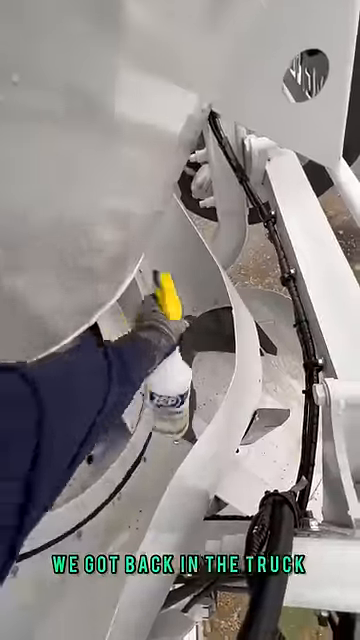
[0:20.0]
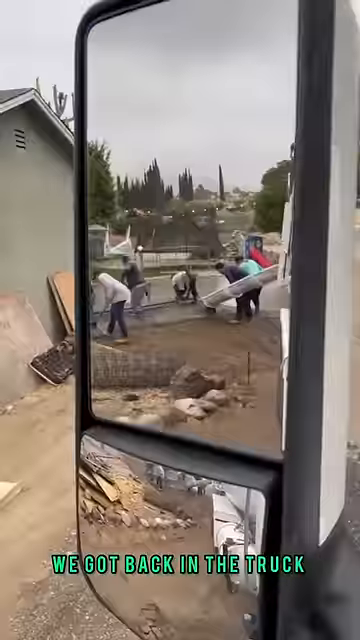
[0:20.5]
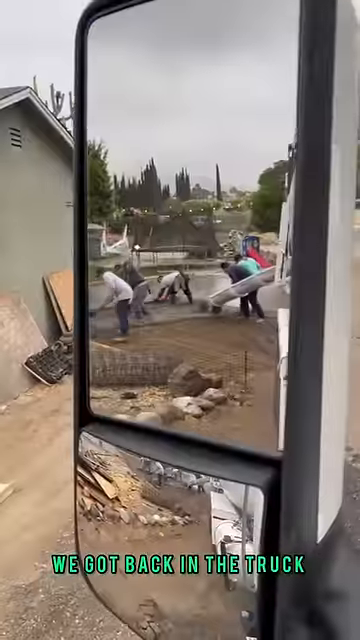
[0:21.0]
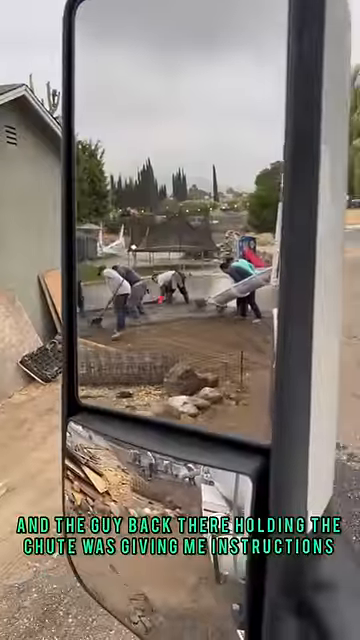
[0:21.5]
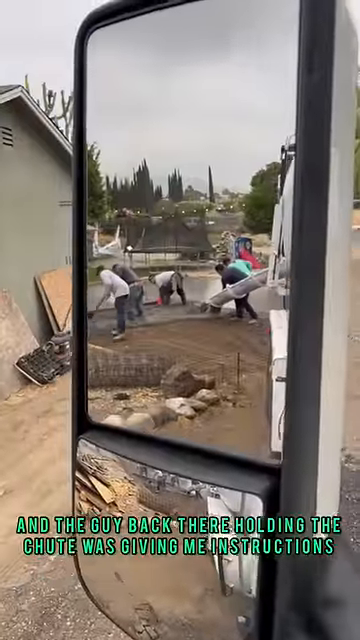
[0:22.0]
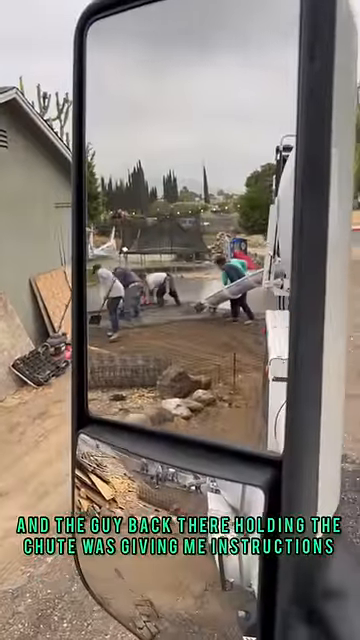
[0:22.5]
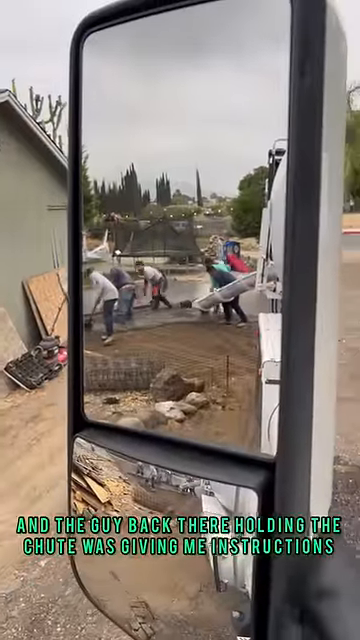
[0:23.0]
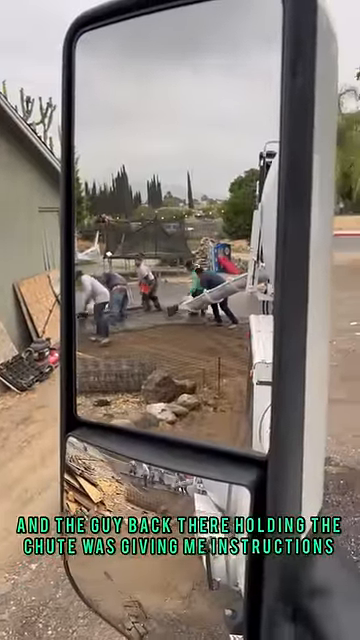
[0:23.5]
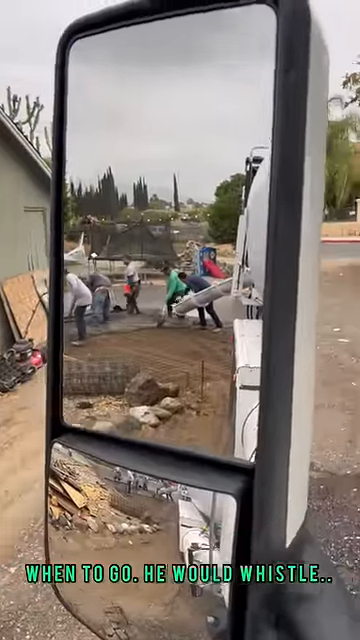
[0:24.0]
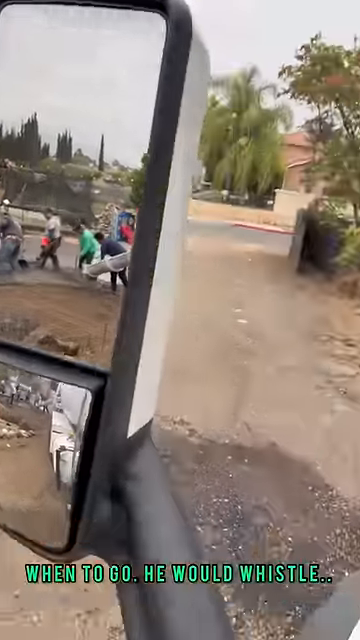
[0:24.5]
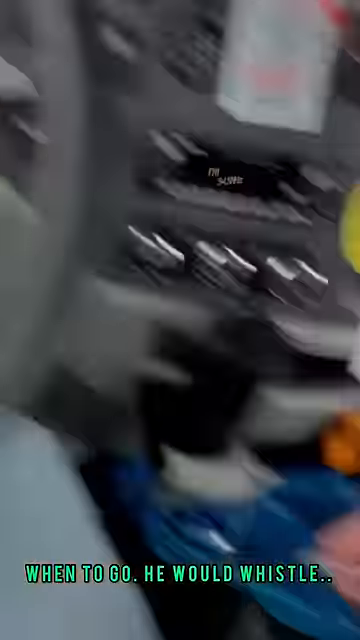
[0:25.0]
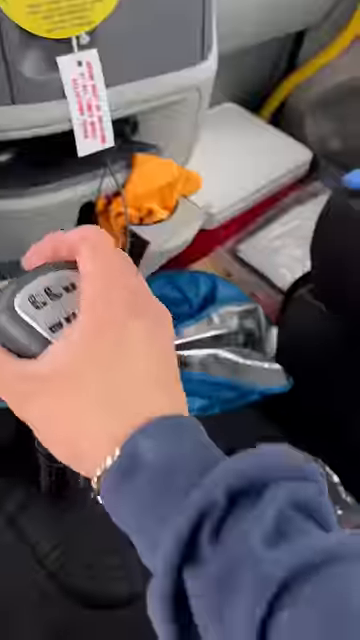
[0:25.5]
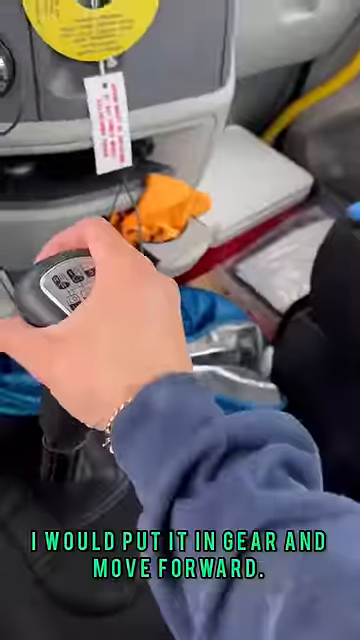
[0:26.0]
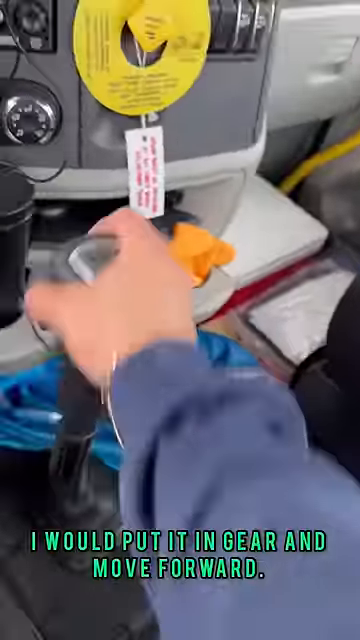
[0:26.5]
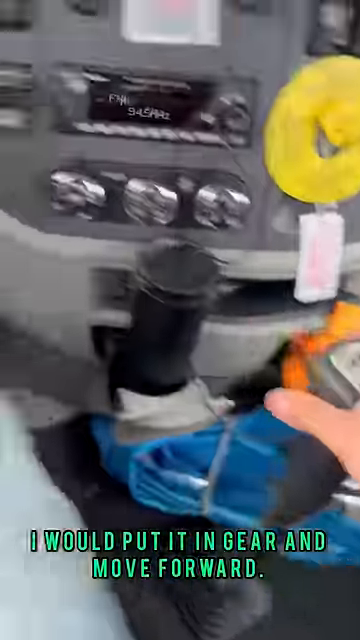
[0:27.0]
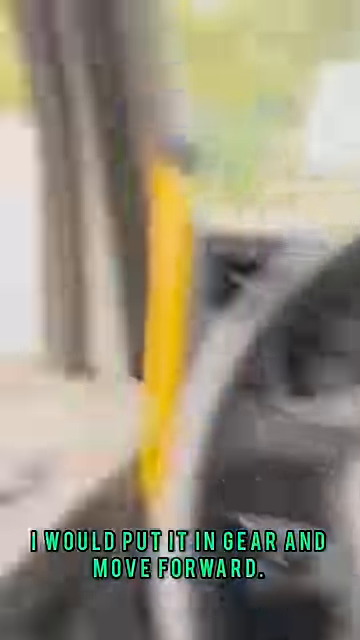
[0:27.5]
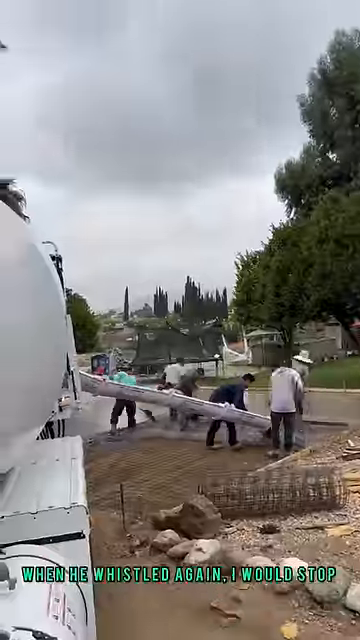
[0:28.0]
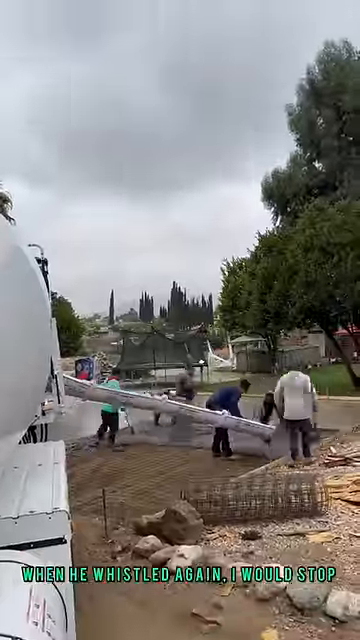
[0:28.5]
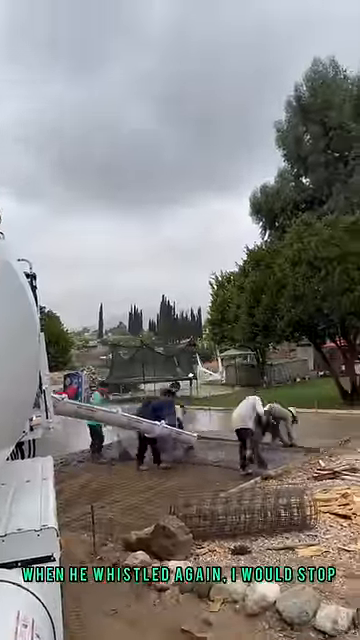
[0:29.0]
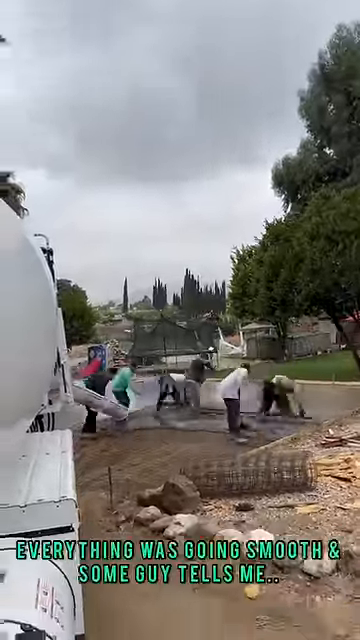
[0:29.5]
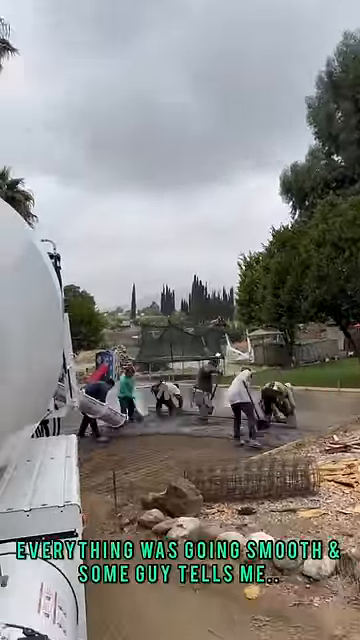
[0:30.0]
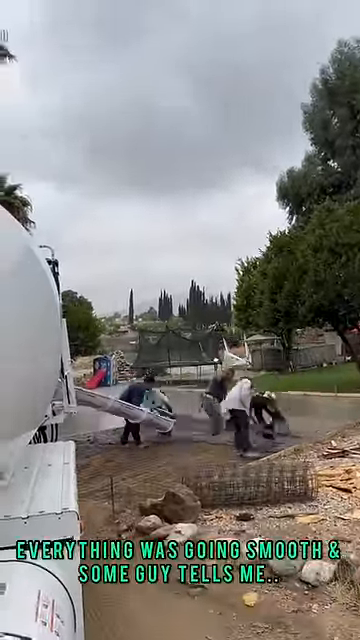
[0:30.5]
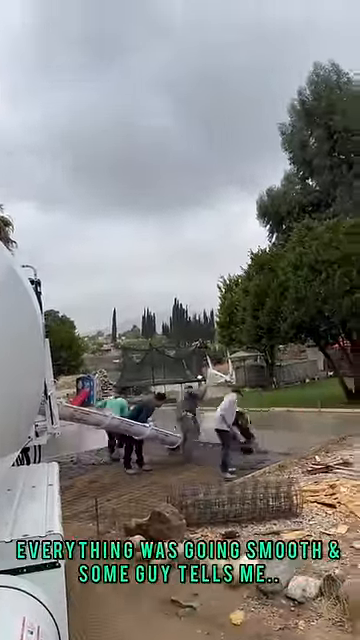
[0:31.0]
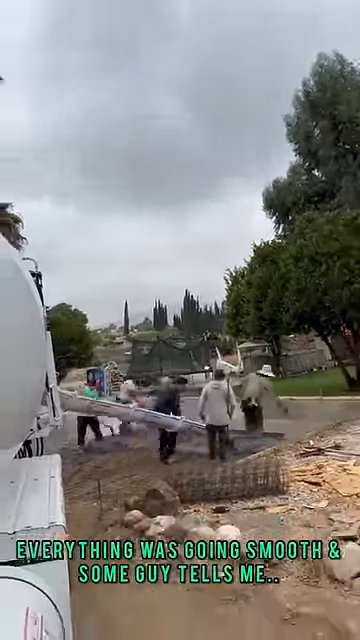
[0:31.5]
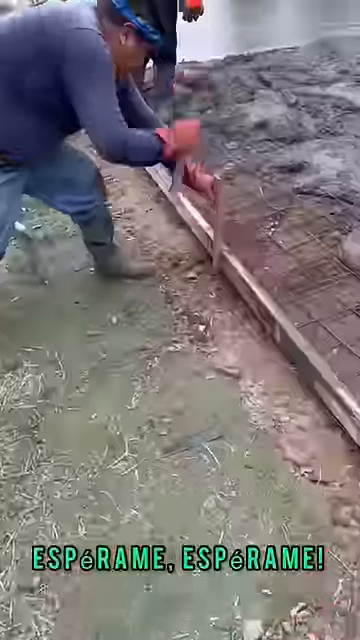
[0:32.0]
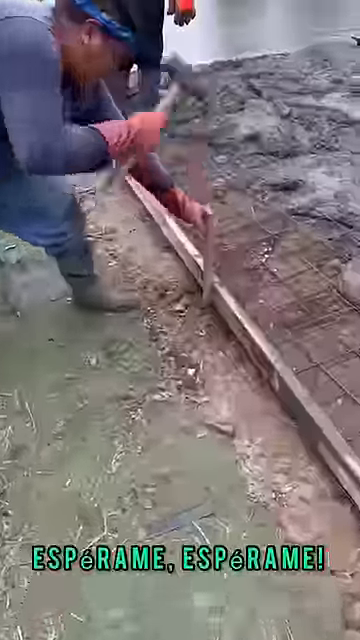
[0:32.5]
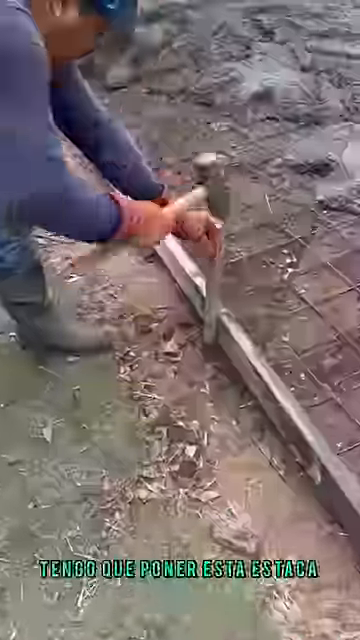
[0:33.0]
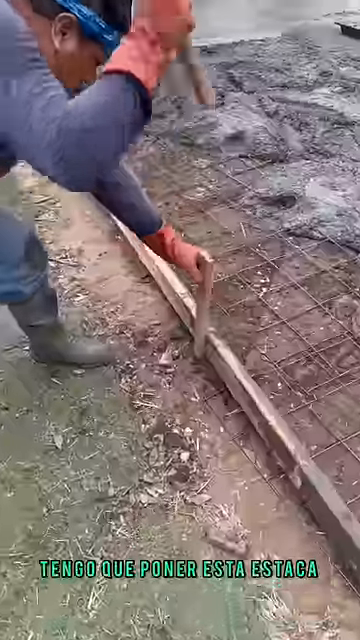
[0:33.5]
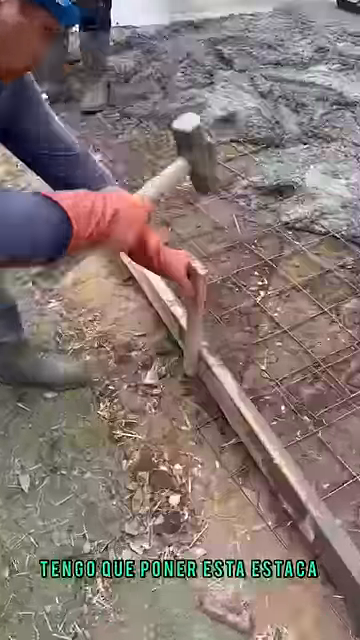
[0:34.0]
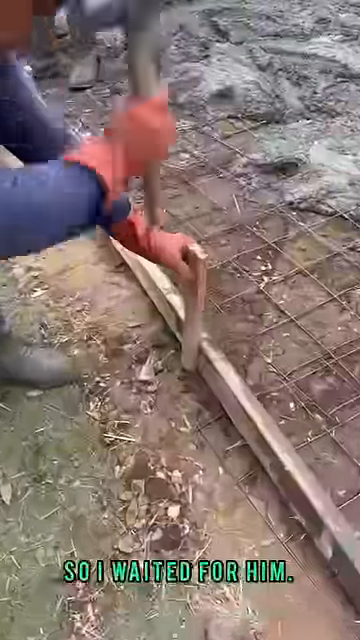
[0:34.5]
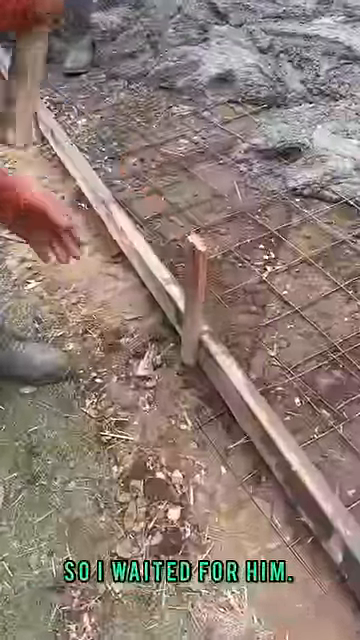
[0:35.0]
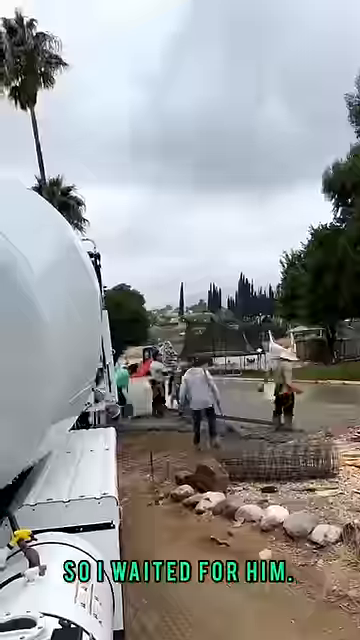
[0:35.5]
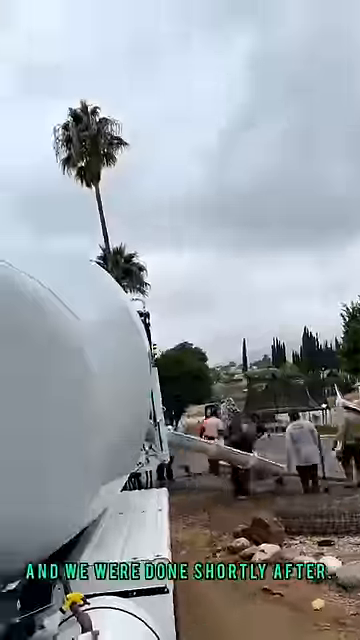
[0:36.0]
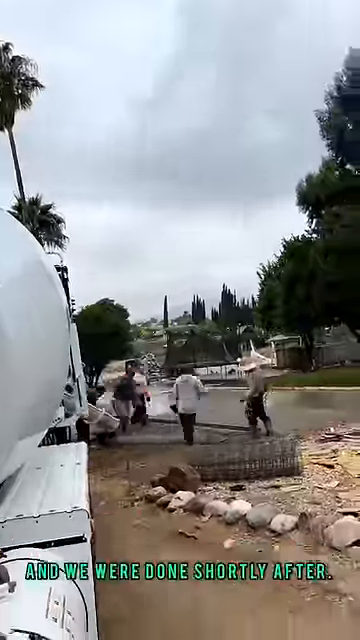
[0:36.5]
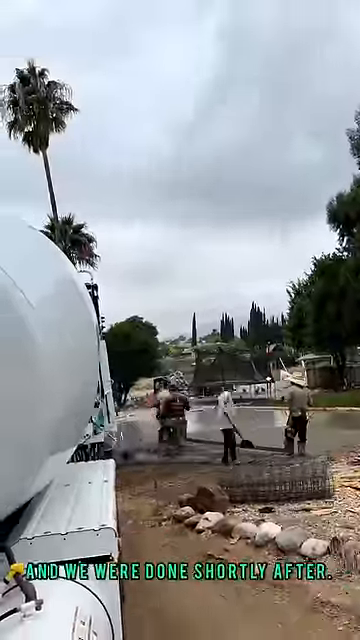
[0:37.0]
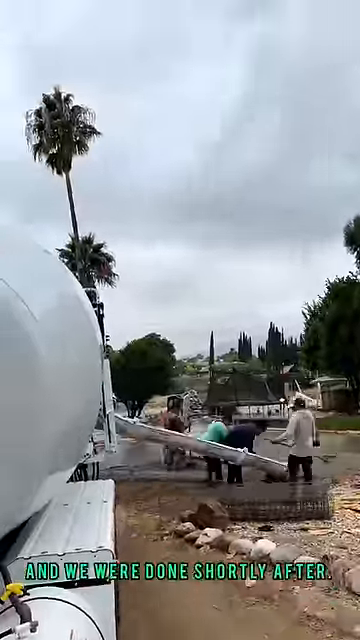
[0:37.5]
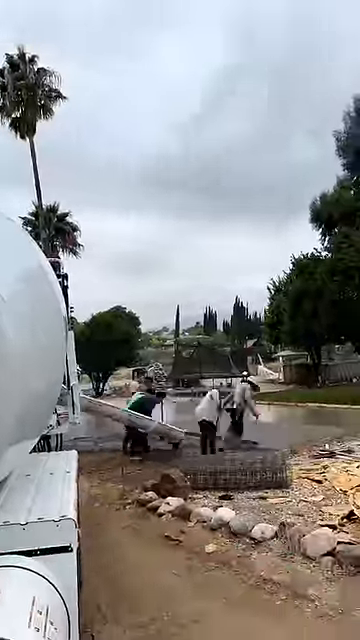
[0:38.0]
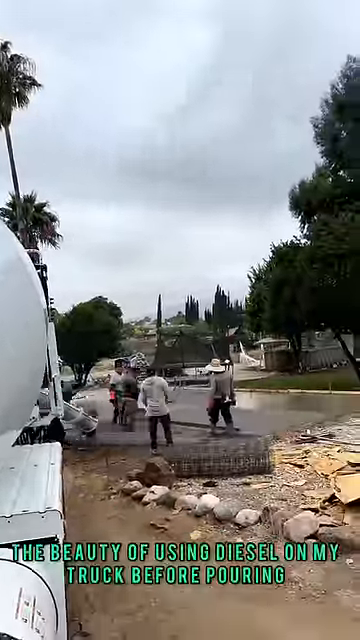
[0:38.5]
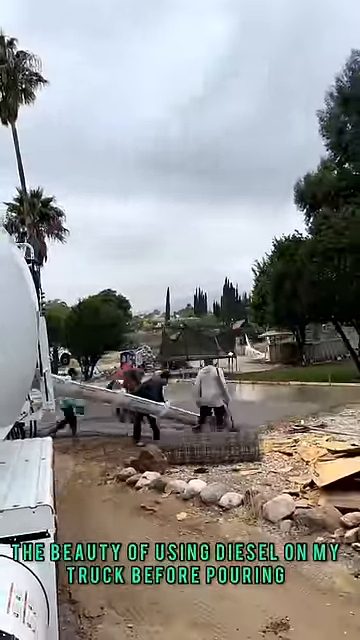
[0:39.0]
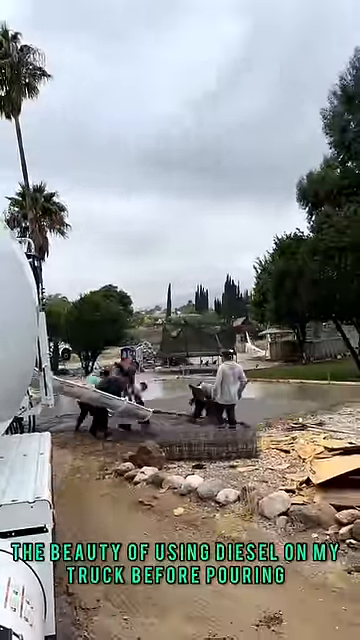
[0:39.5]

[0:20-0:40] Outdoors at the construction site of a home, pavement is being laid. A mixer's chute is dumping concrete while about four or five workers make sure the concrete is smooth, using what look like mops and shovels or some other tool to straighten and smooth it out. Text at the bottom reads "and the guy back there holding the chute was giving me instructions." The shot is taken from the mixer itself or from one of the construction vehicles. The text changes to "when to go, he would whistle." Inside the vehicle, a man's hand is on the stick drive, and the text at the bottom changes to "I would put it in gear and move forward." From a different angle, the same men smooth out the concrete, and the text changes to "when he whistled again, I would stop." The scene then changes to a close-up of one worker hammering down a piece of wood, a stake, on a grid that has concrete on it. The video returns to the same workers from the same angle, working the concrete into the ground next to the mixer, and the text changes to "and we are done shortly after." One of the workers moves the mixer chute back and forth.